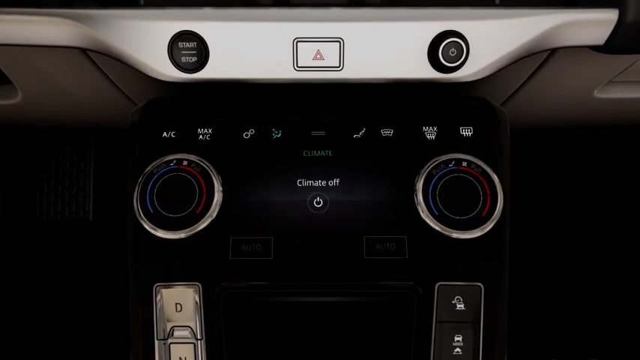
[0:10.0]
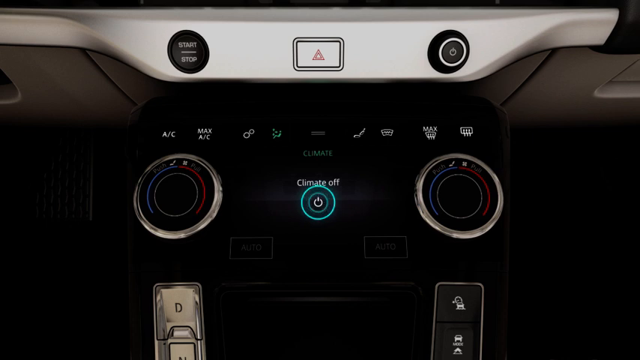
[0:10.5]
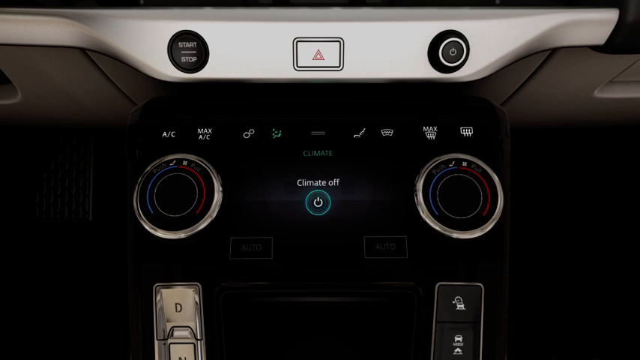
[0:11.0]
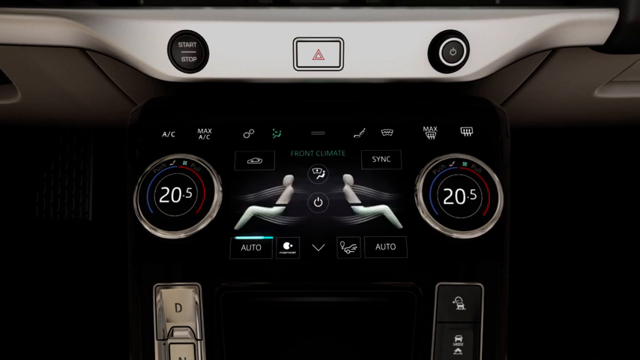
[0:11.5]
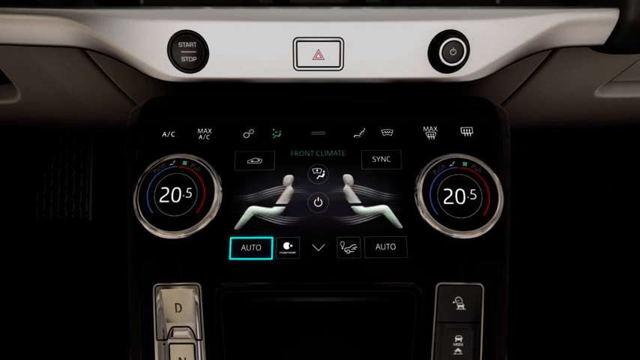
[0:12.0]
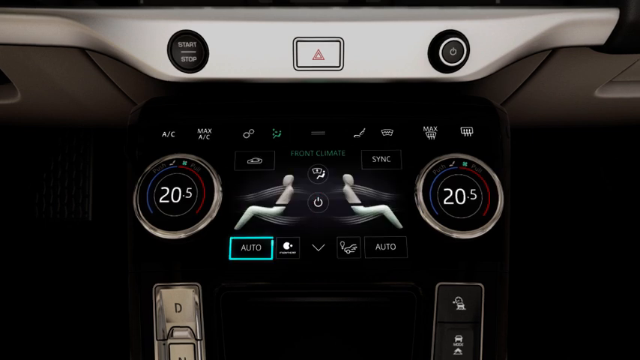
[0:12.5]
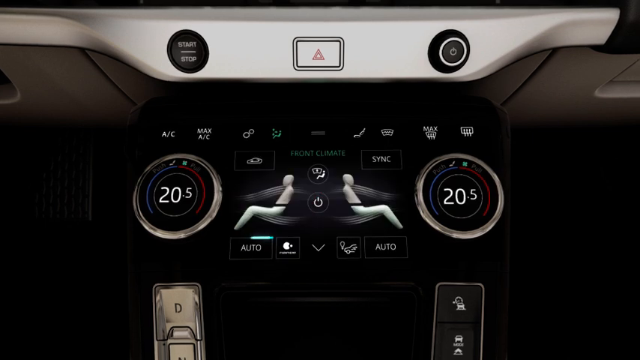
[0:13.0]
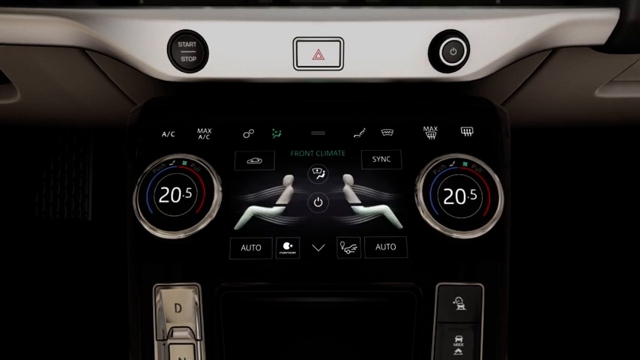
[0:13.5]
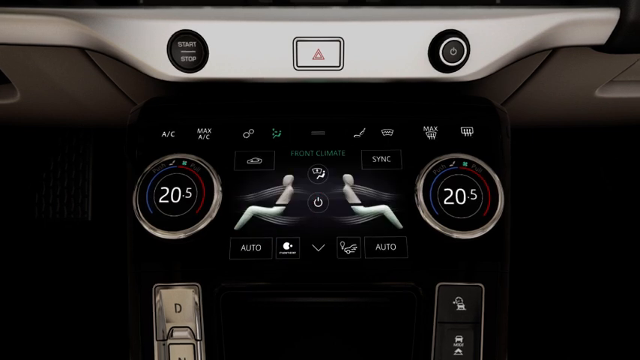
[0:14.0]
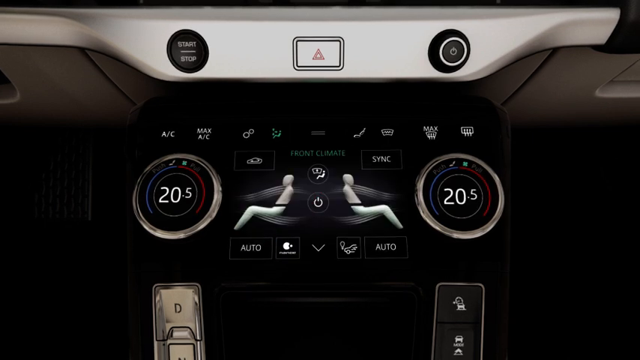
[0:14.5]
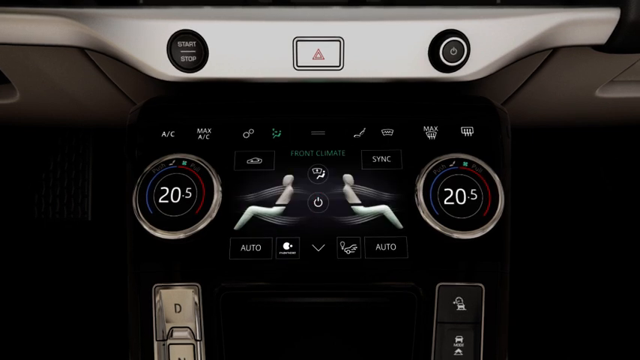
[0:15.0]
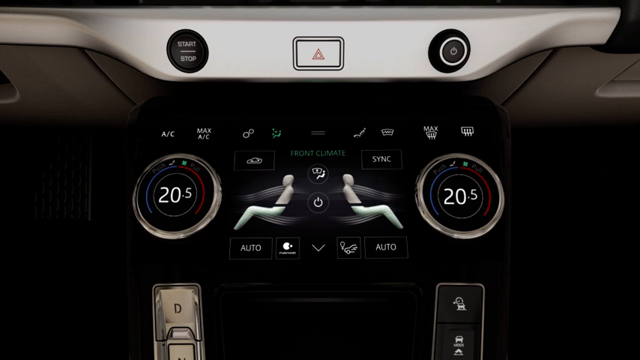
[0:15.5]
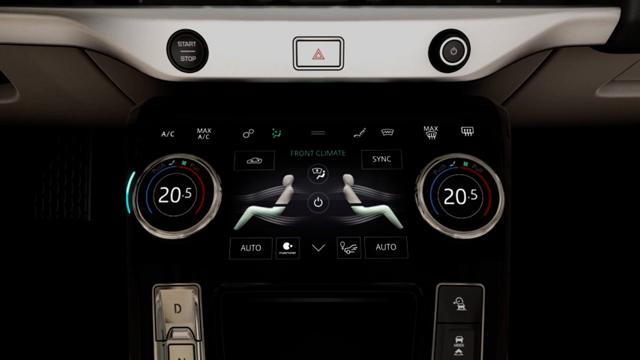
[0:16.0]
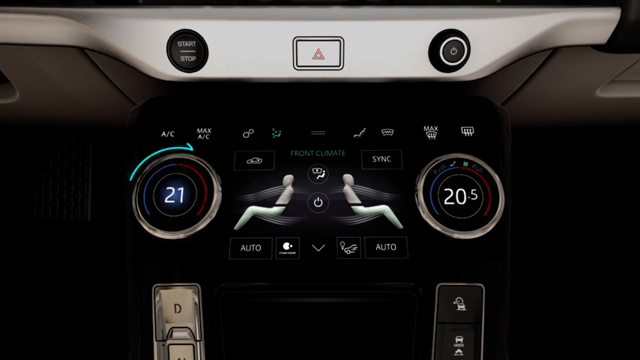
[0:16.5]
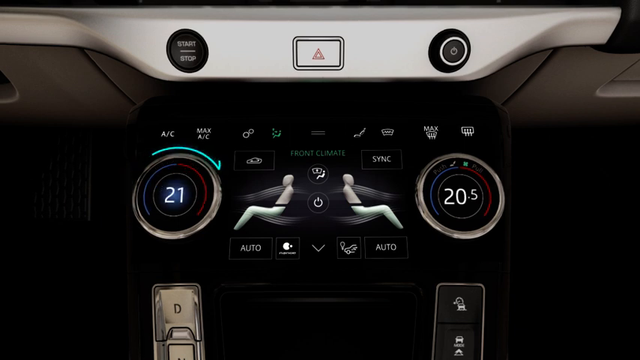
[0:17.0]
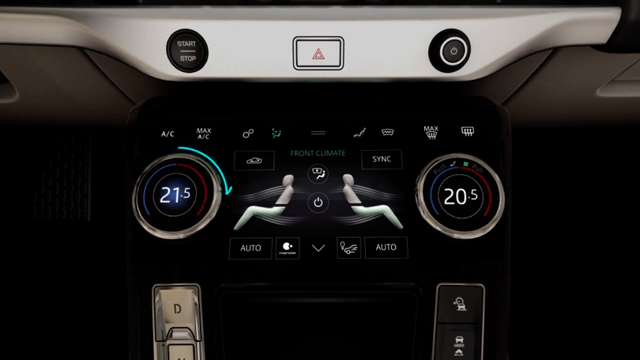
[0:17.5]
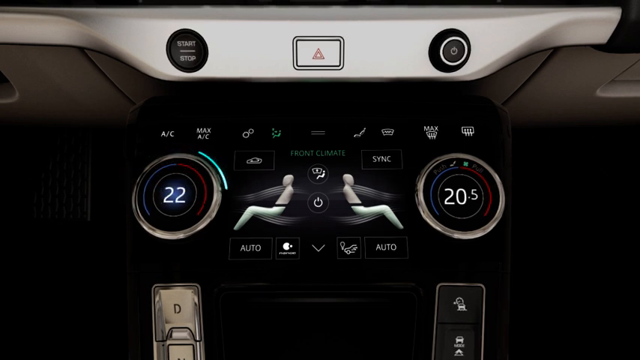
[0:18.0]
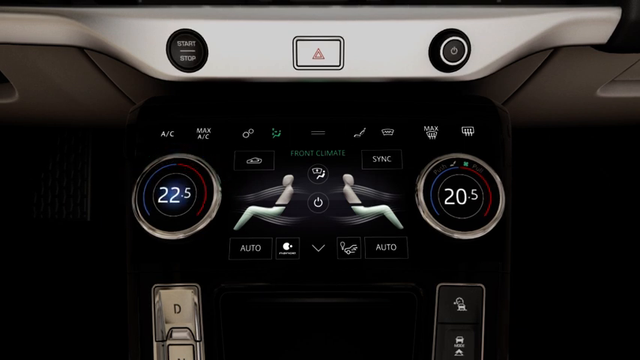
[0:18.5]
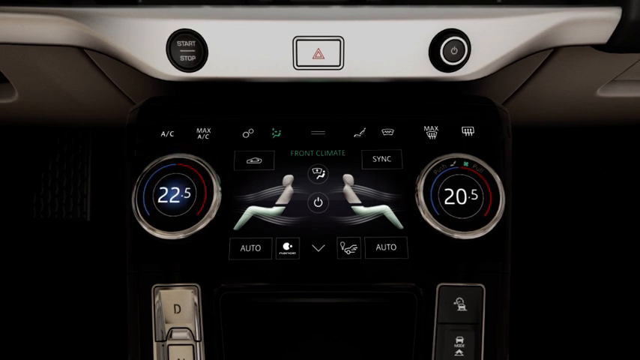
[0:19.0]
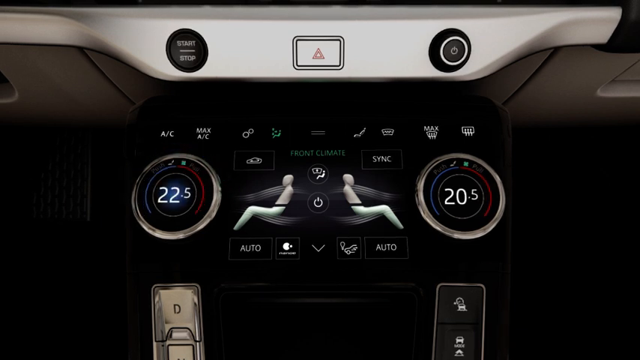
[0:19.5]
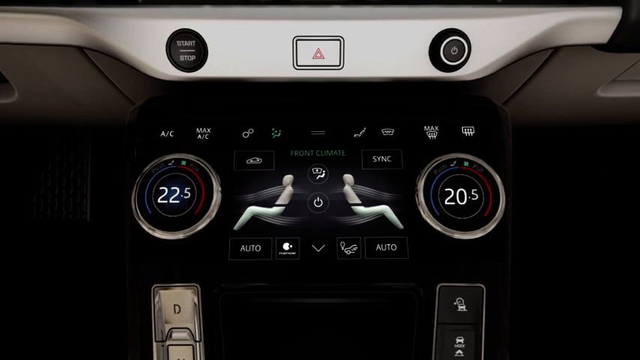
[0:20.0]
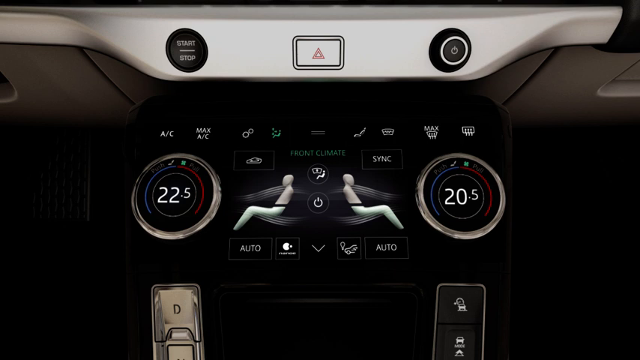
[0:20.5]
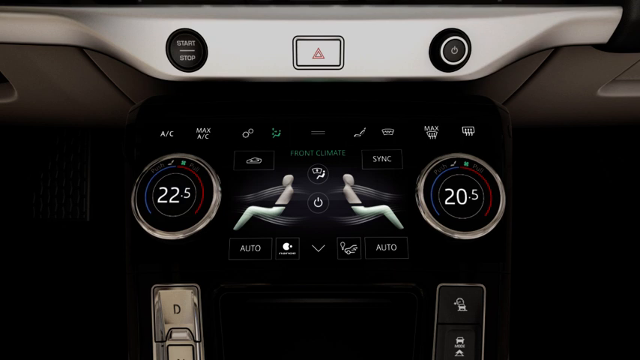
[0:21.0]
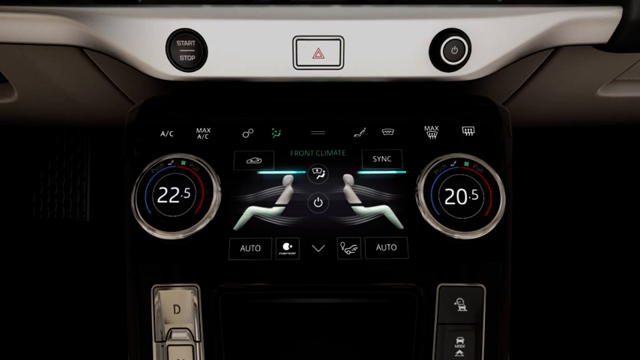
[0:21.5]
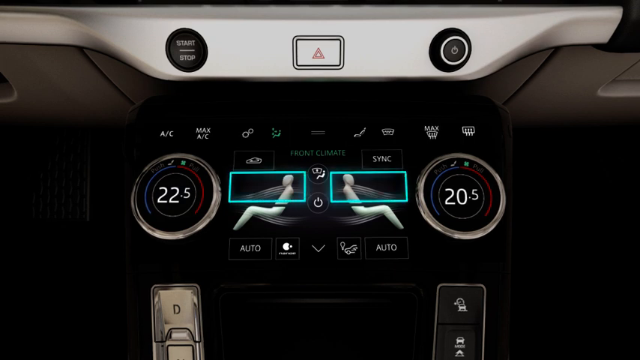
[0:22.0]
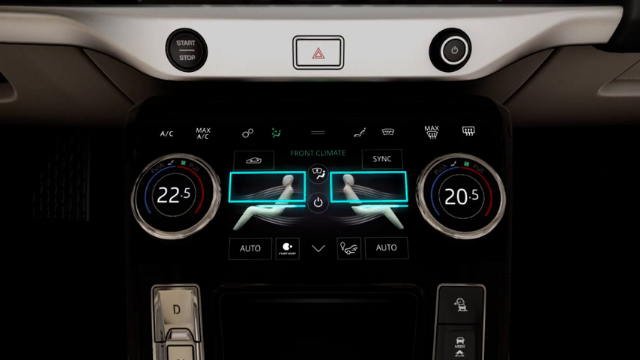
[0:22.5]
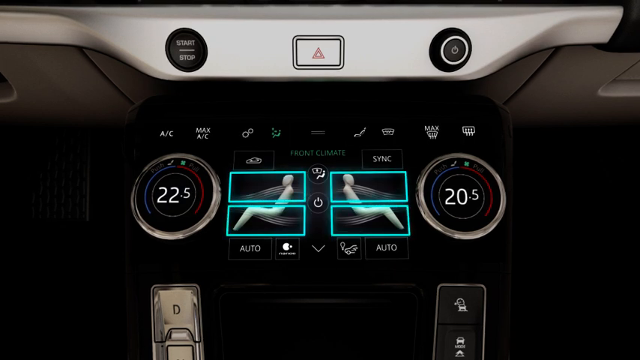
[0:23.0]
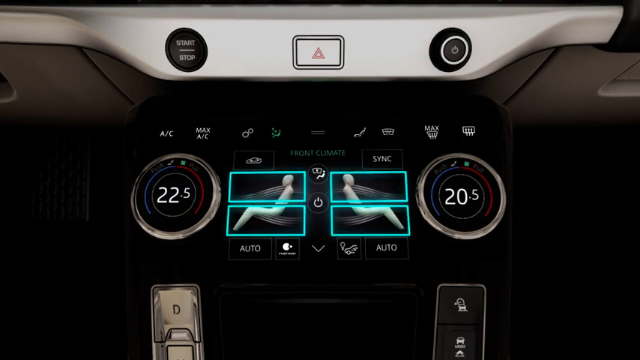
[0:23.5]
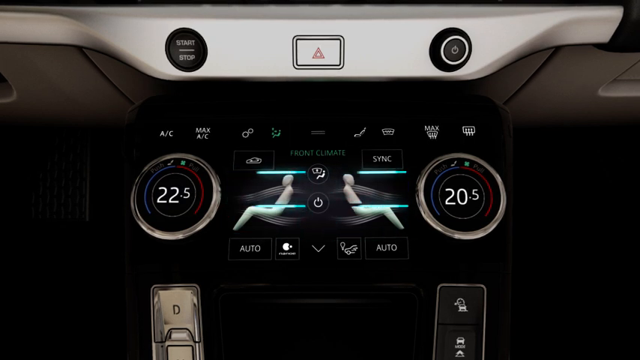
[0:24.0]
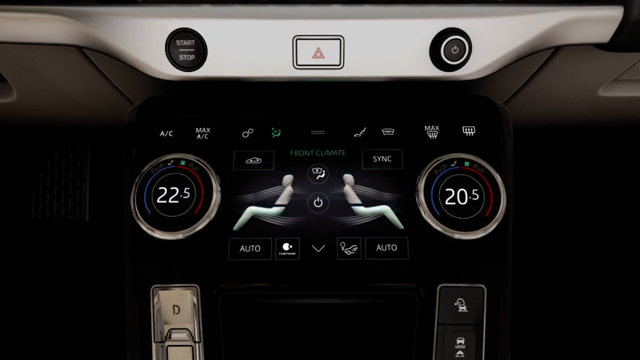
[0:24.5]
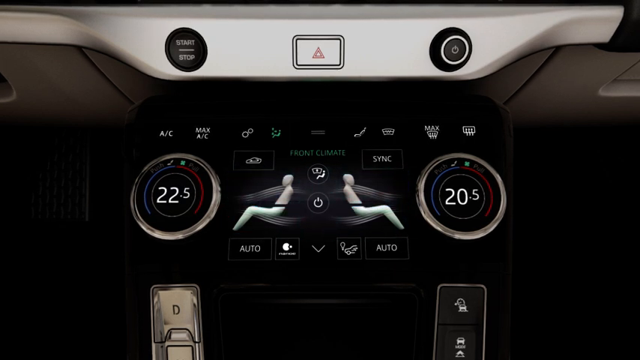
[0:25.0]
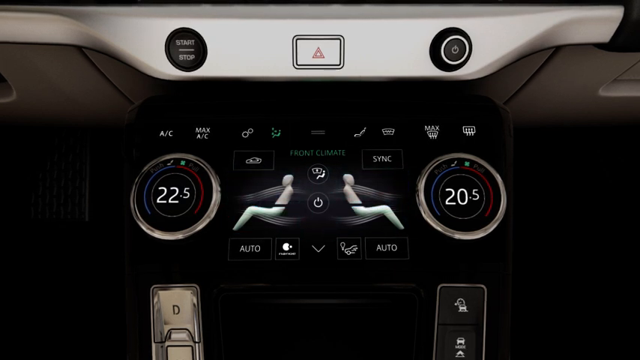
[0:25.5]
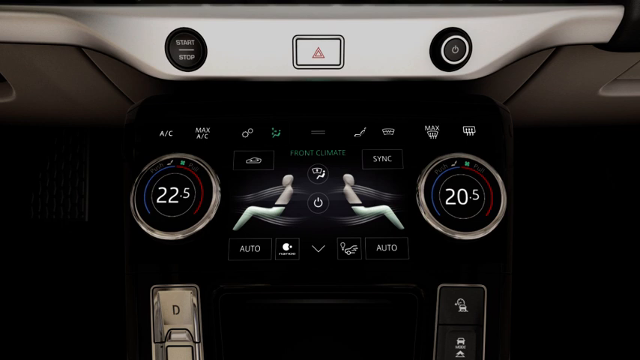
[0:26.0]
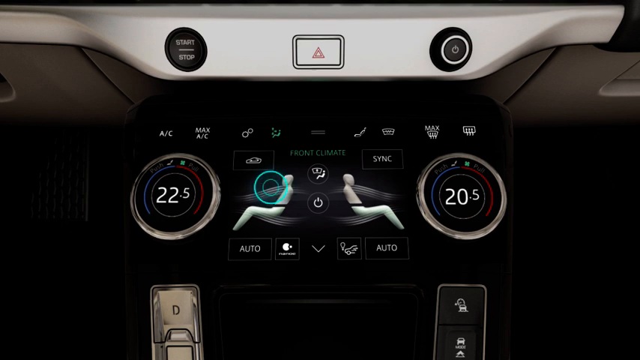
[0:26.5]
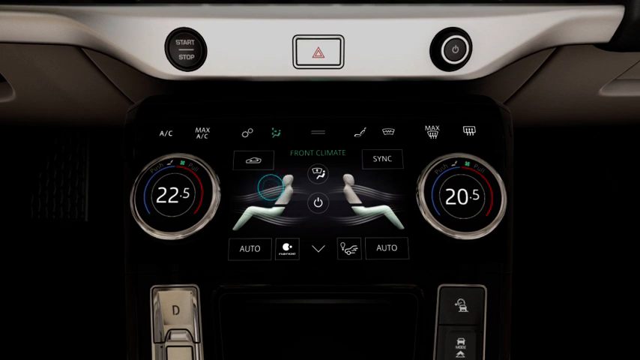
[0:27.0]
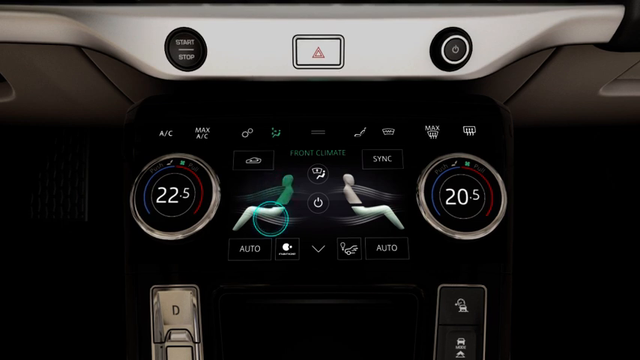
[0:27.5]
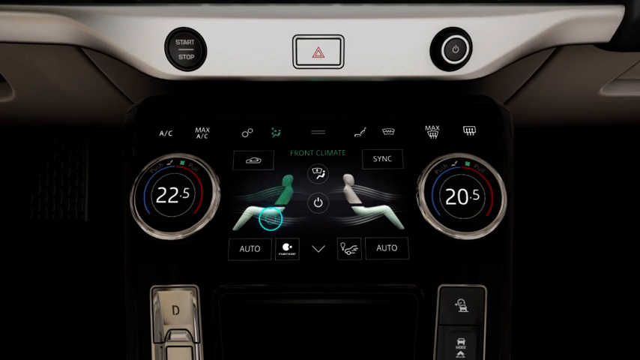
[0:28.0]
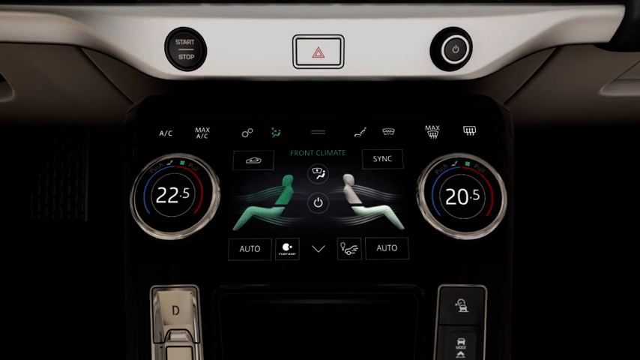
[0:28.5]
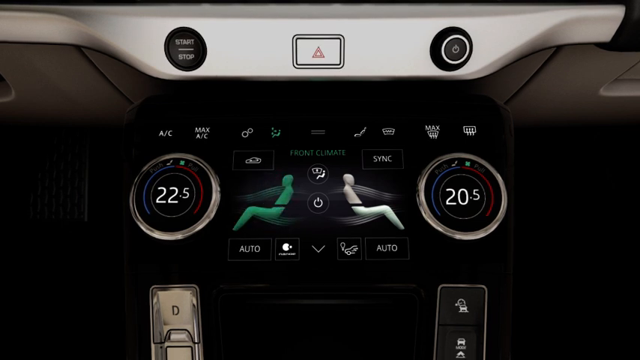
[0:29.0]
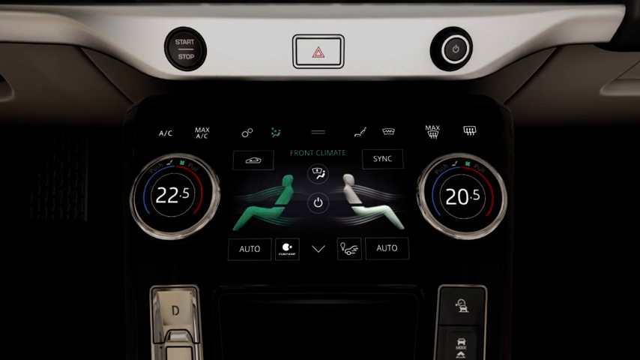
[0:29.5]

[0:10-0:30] The view shows the panel between the seats, the underside of the dashboard facing the gear stick area. On the left-hand side, at the top of the screen, about half of what might be a glove compartment is visible, with what looks like a pedal below it. At the top center is a black circular button with a black boundary, bearing white text reading "start", underlined, and then "stop". Next is a central rectangular button with a white background and a white border, outlined in black on both the outer and inner border; inside is a red triangle in the same format: red on the outside, then a little white, then a red triangle, with white inside. To the right of center is another button with a power symbol: a circle with a vertical line protruding out of the top. Below these is a control unit with various buttons, symbols, and dials.